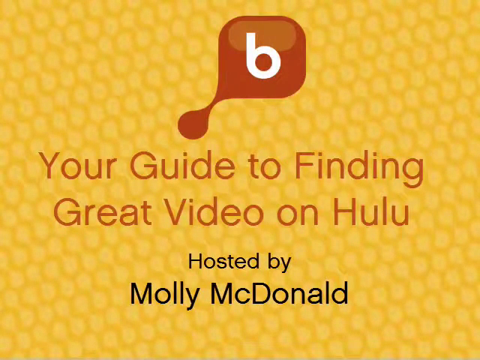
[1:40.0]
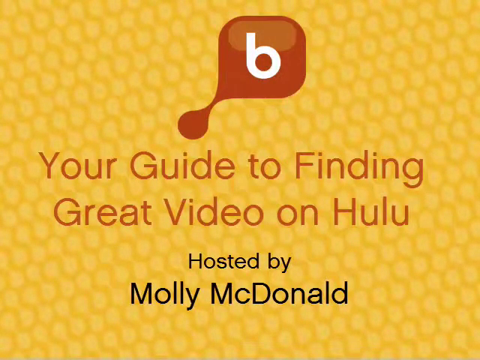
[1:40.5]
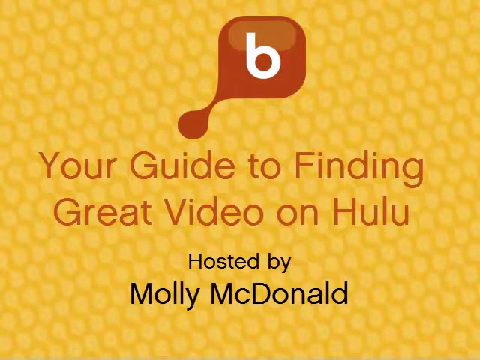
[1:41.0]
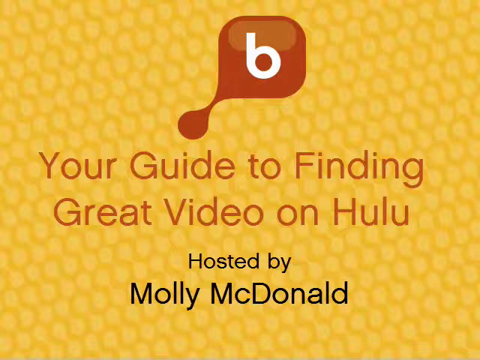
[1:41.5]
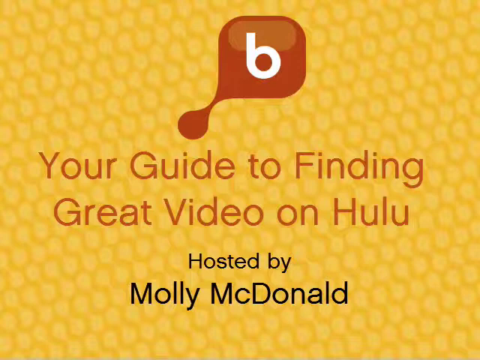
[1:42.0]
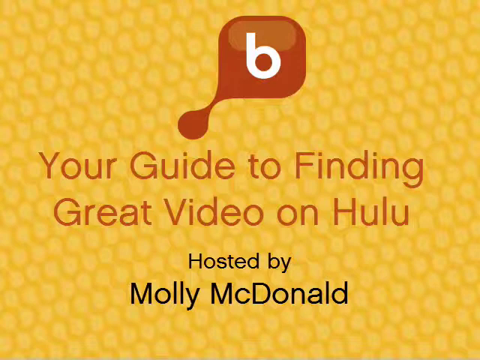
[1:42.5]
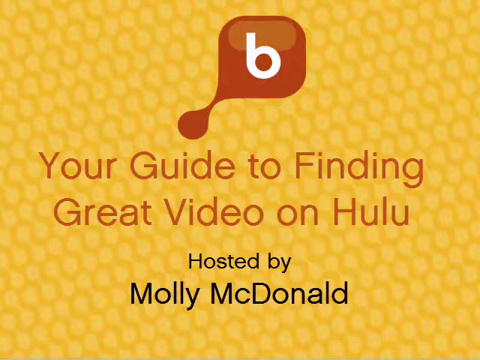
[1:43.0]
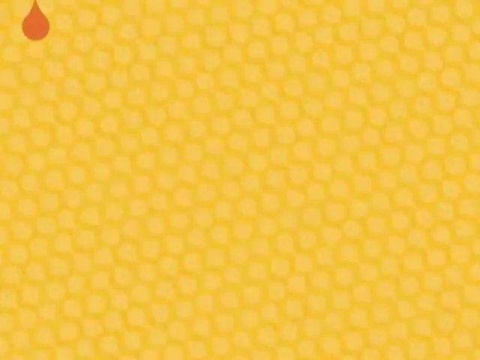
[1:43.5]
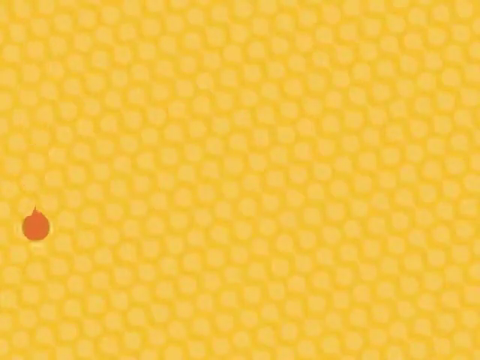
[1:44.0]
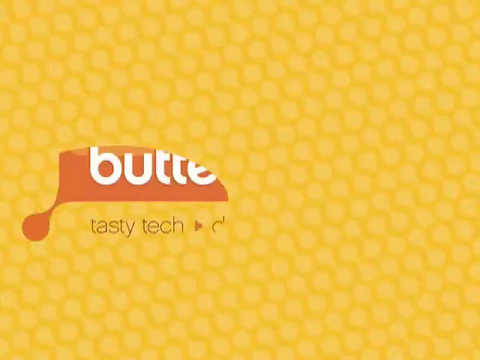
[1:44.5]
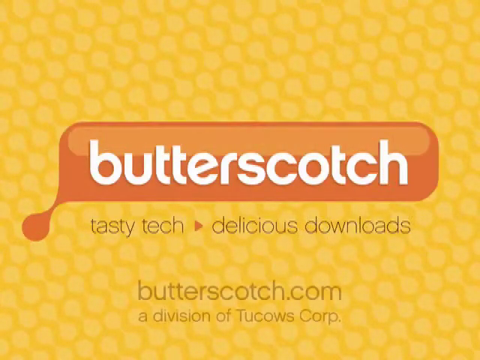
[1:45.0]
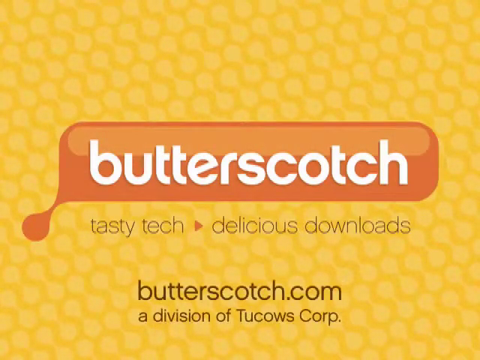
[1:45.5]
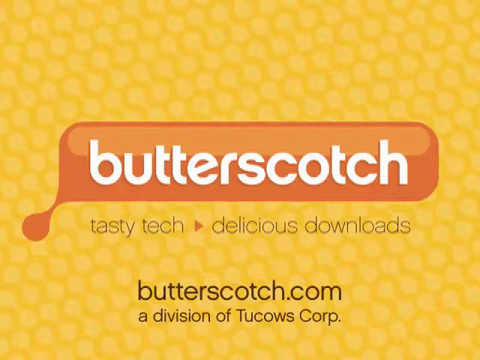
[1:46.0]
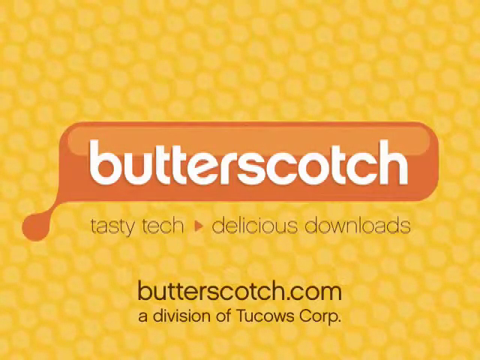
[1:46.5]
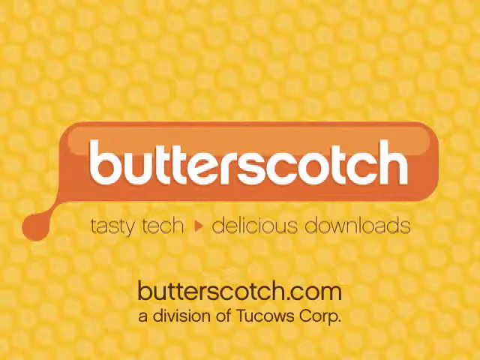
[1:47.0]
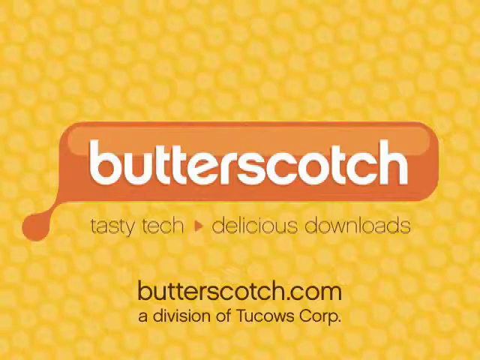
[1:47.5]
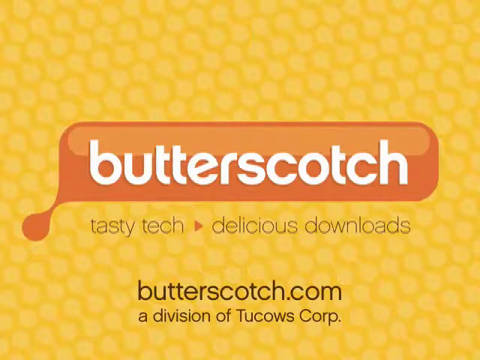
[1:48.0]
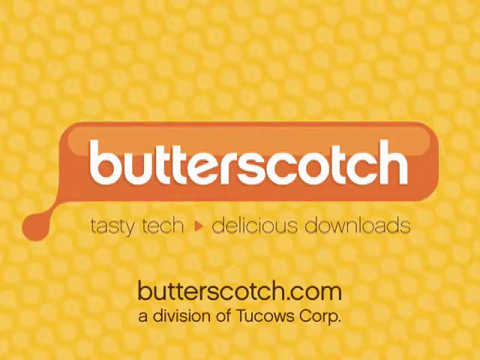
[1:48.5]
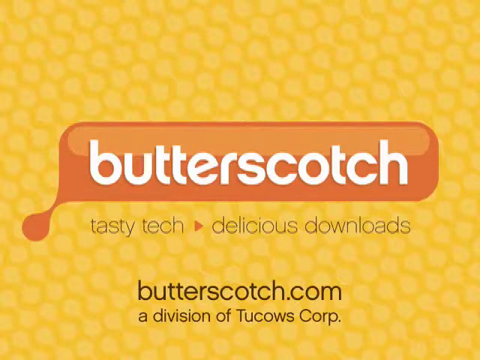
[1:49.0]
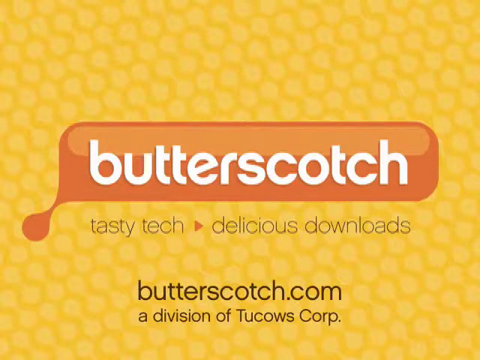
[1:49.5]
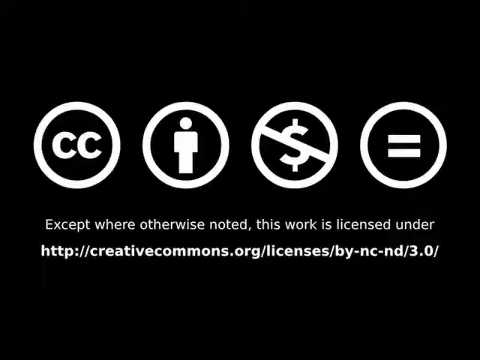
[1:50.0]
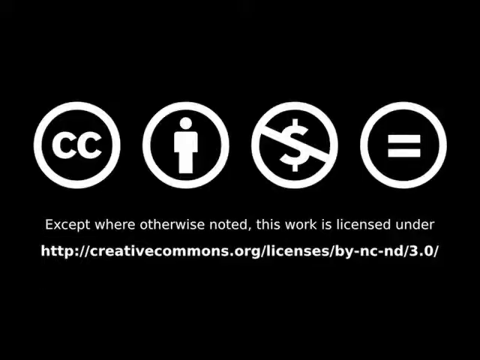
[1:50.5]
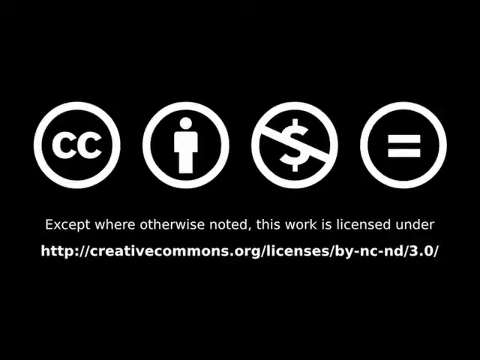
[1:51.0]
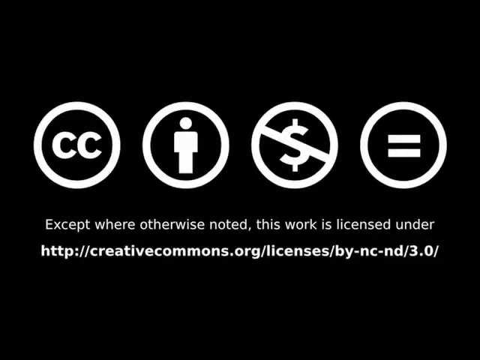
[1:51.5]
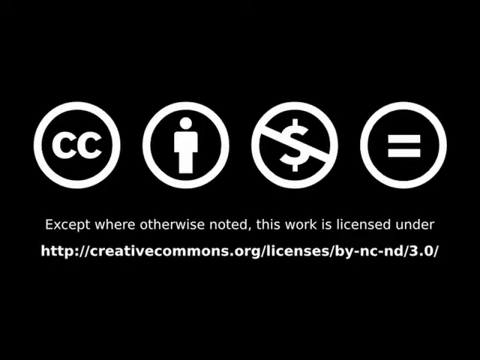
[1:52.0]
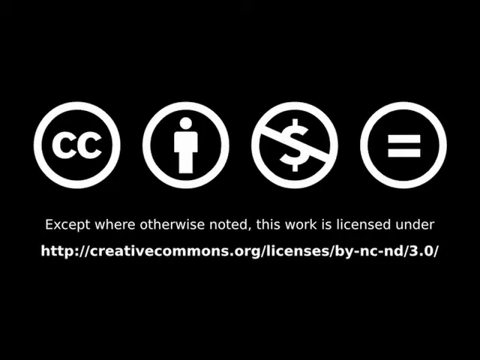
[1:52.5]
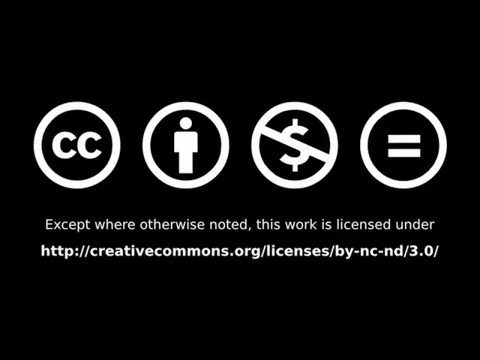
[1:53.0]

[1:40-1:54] The background is two different shades of yellow and looks like a close-up of an ear of corn. In the foreground, a tan rust-colored teardrop forms a square with rounded corners containing a lowercase "b" in white. Beneath it, "your guide to finding great video on Hulu" is written in a rust color, and underneath that, "posted by Molly MacDonald" in black. The video stays static on this page for a moment, then the scene changes: a butterscotch-colored drop comes down from the upper left portion of the video to about a quarter of the way down the screen, and a butterscotch-colored pop-up box appears with the word "butterscotch" in white. Underneath are "tasty tech, delicious downloads" and "butterscotch.com, a division of Two Cows Corporation." The scene then changes to some notifications within three circles, with "except where otherwise noted, this work is licensed under" beneath them.